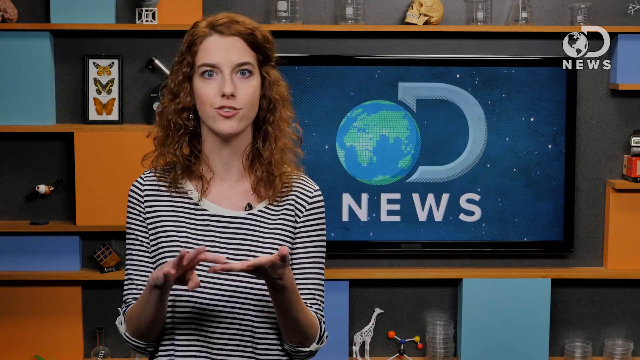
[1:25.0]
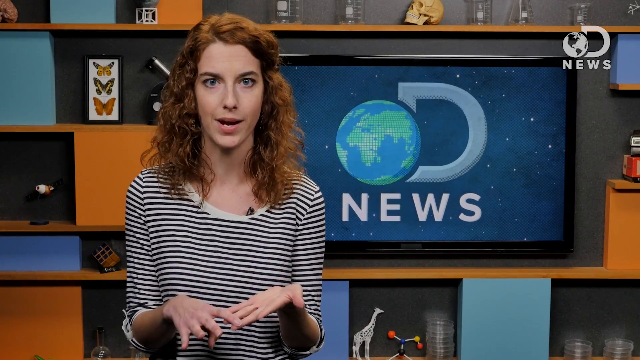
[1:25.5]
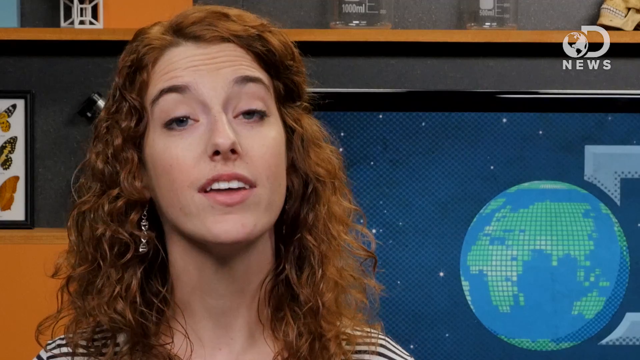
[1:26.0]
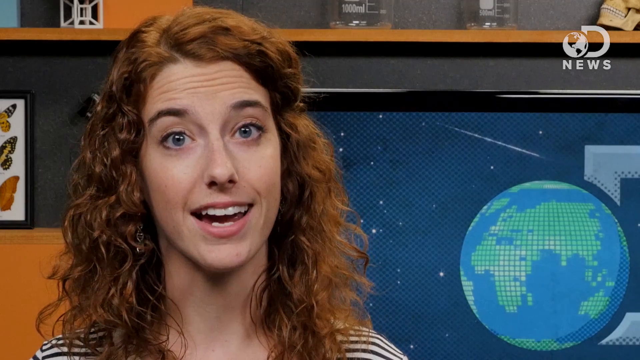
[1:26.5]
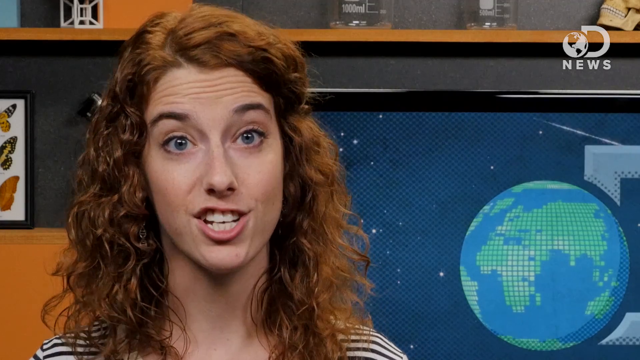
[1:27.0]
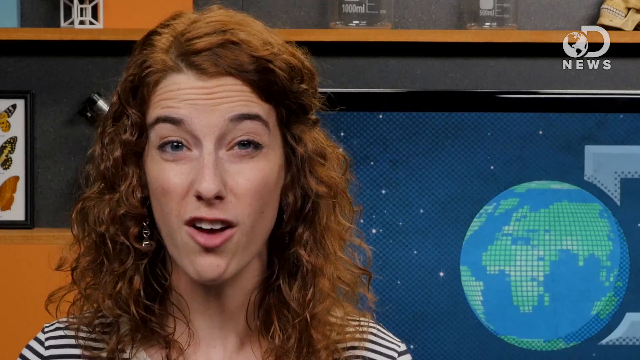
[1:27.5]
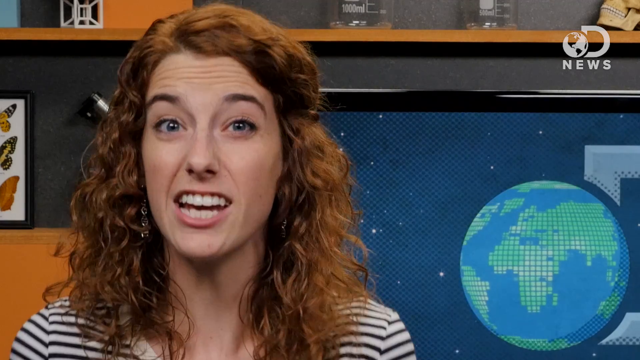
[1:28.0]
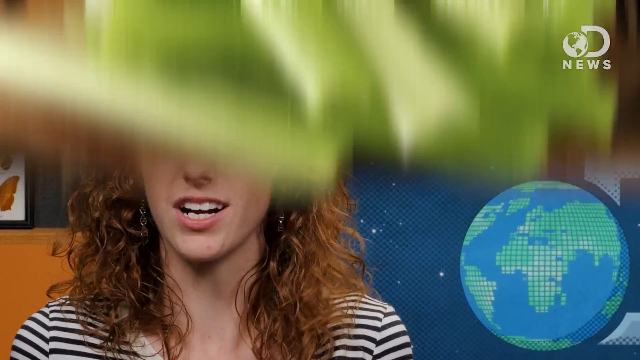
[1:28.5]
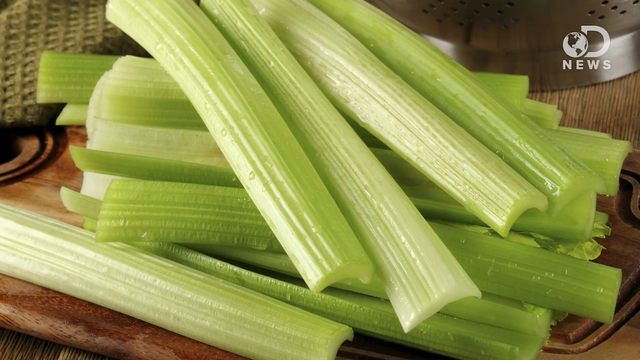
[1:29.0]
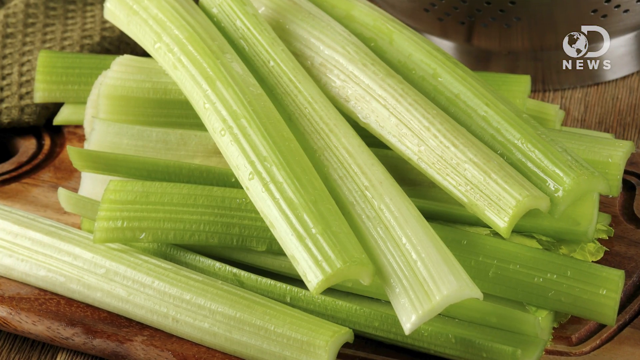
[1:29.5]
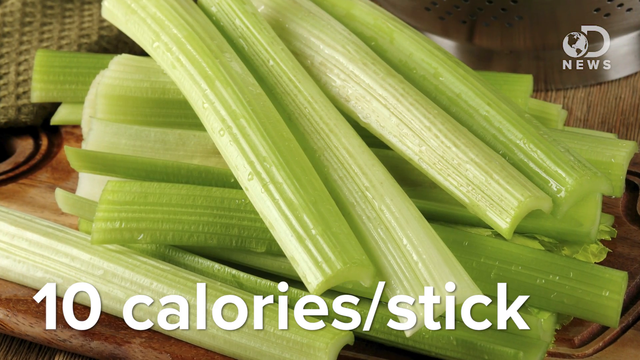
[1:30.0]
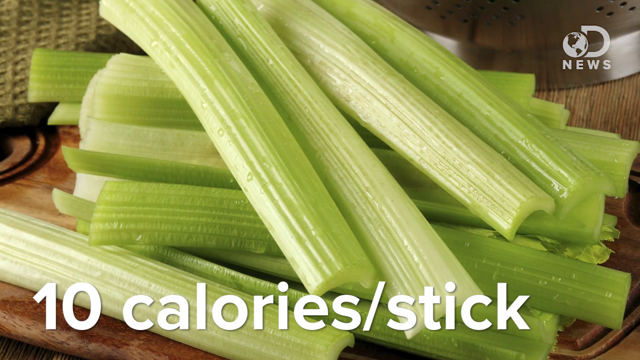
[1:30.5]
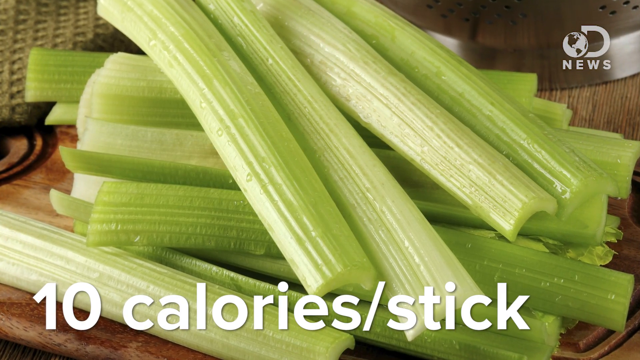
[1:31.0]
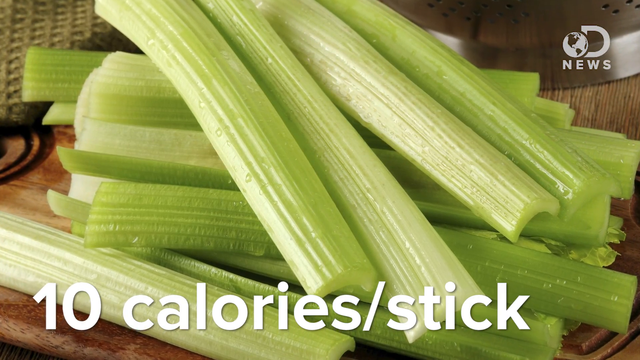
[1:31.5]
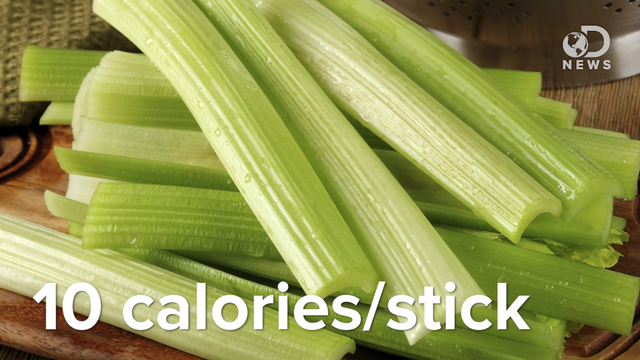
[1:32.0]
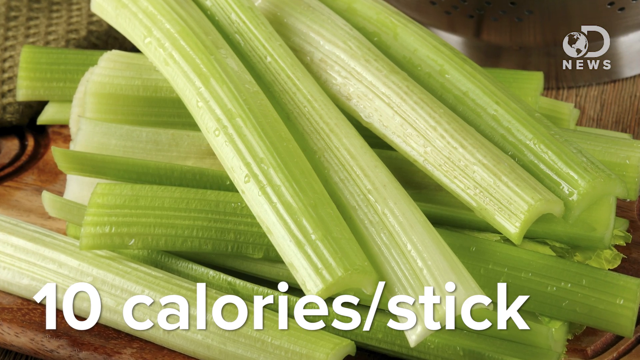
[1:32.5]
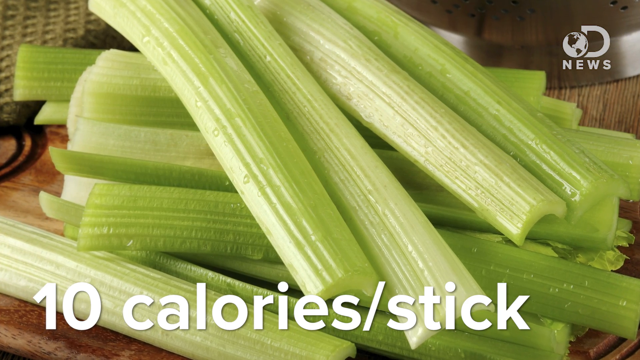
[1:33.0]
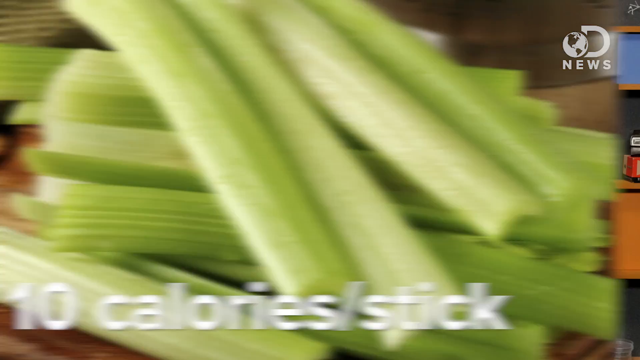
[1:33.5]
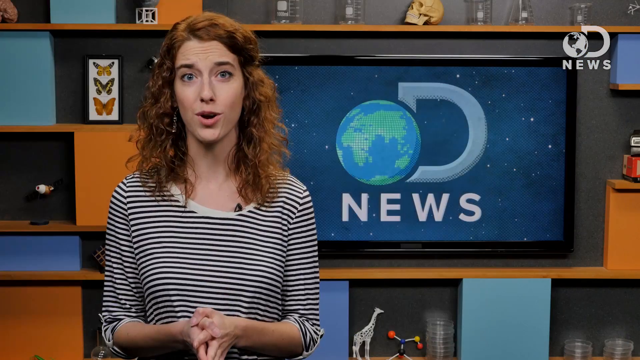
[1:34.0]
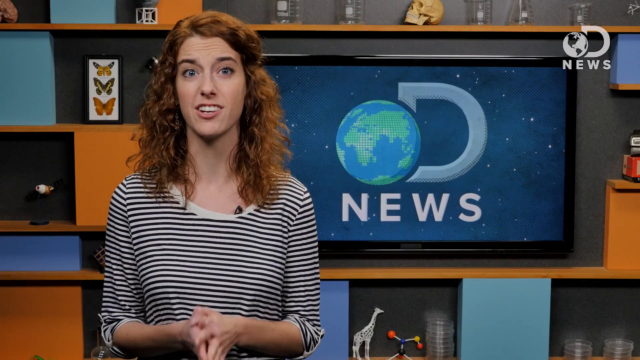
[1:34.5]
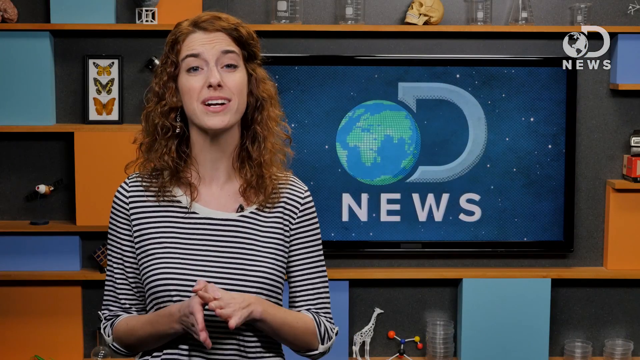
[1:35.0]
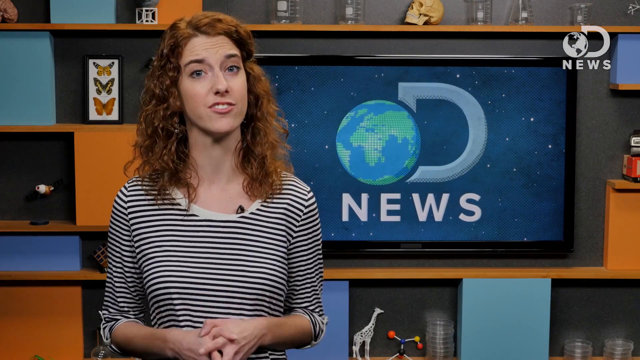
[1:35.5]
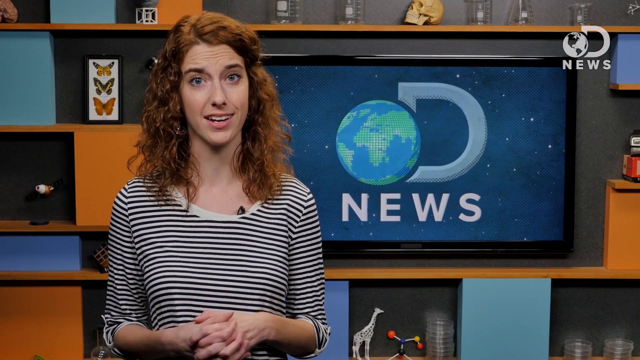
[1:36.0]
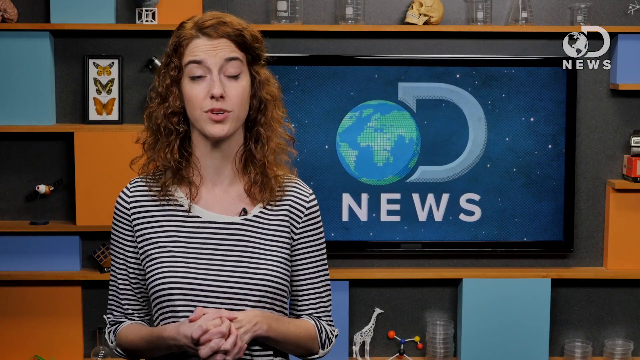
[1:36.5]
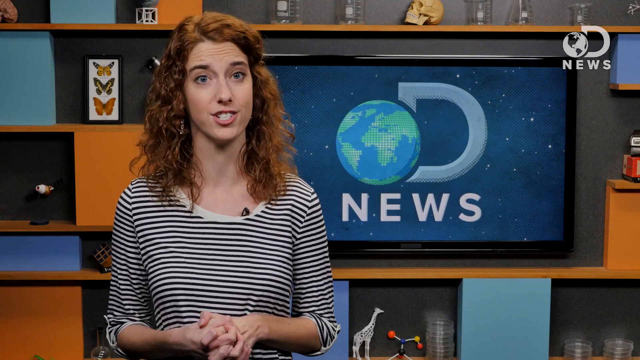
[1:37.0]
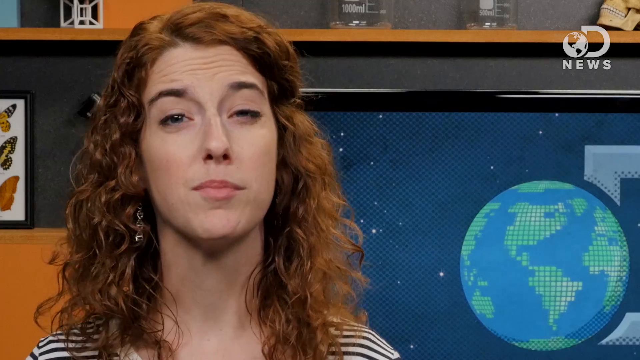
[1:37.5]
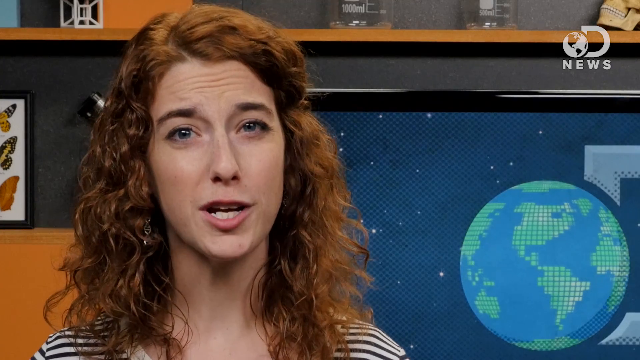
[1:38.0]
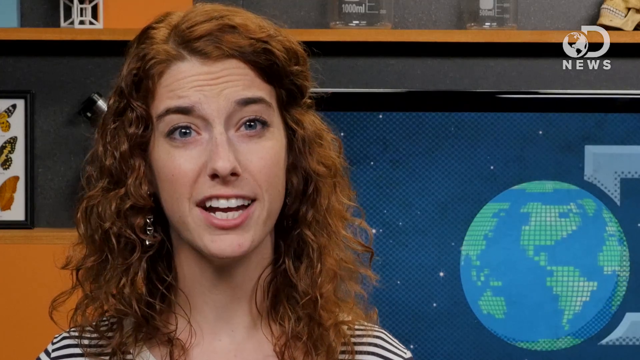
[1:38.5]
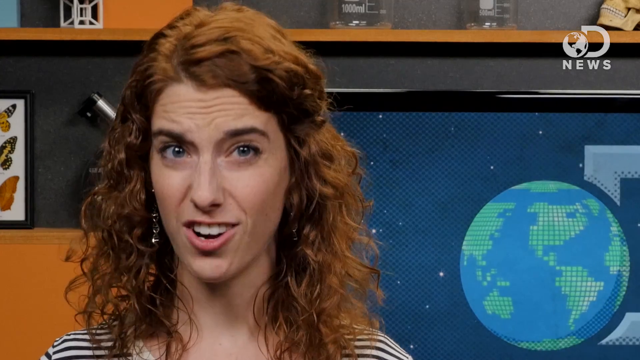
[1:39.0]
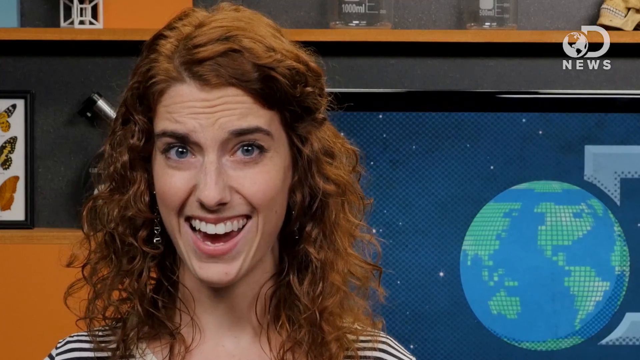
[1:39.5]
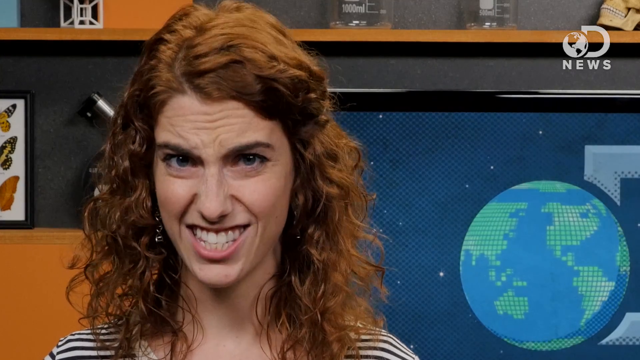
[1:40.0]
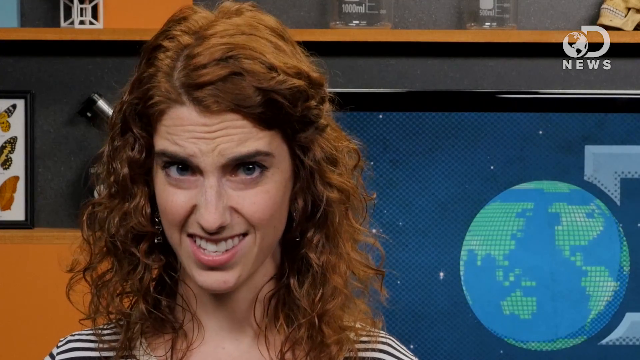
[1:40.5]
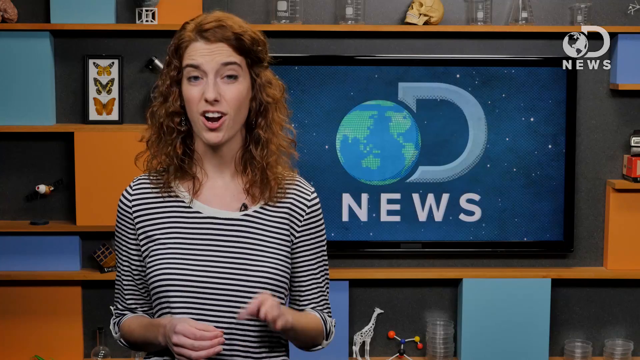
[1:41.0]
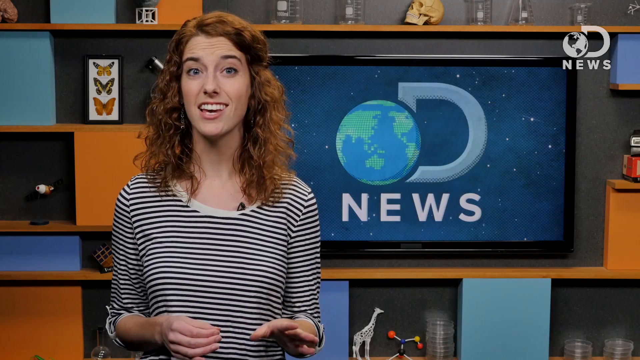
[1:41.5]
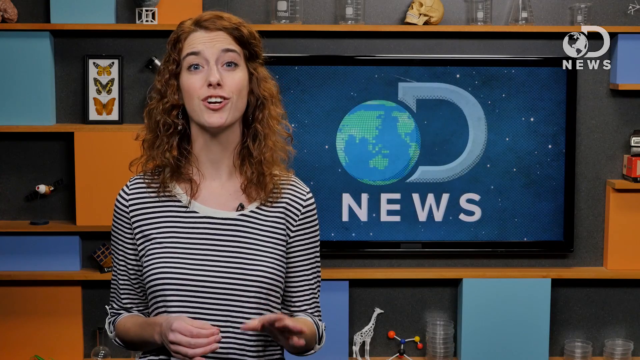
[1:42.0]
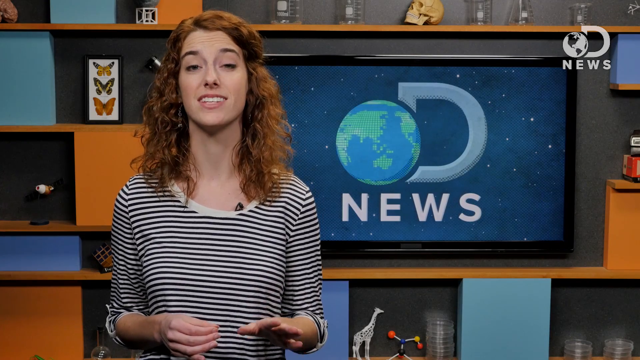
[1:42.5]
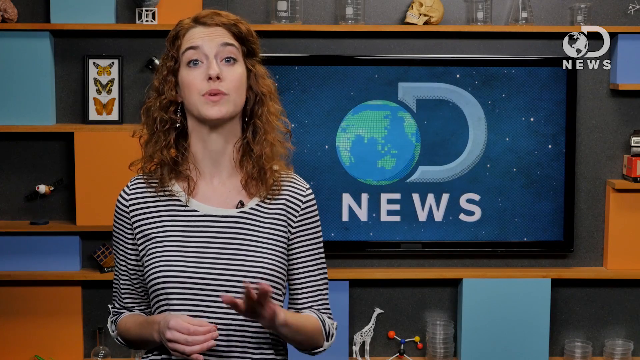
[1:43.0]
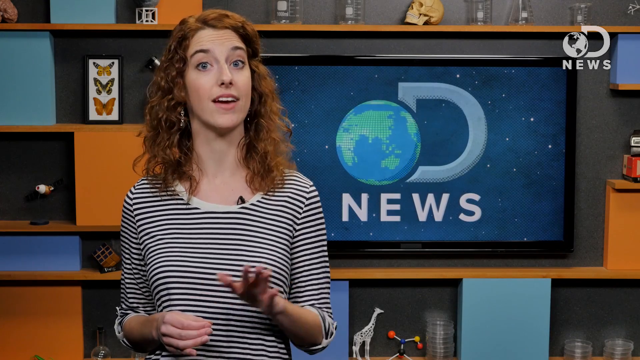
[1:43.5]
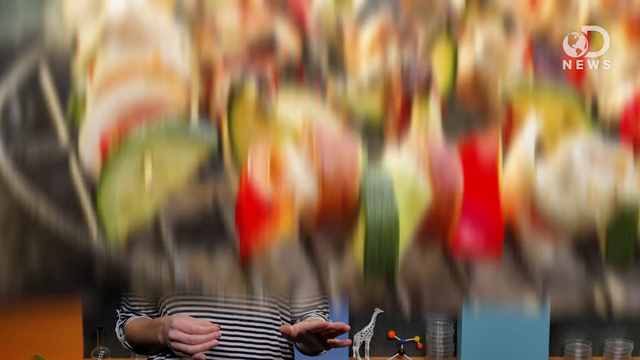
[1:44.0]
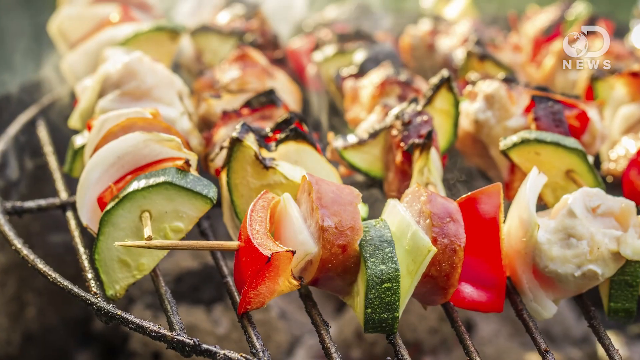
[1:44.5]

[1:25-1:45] A young woman with long, kind of curly red hair stands in front of or to the side of a television screen that shows a spinning globe or earth with the letter D and "news" underneath. She talks; the title of the story is "can you trust the food calorie counts on foods." A pile of celery sticks appears with the text "10 calories a stick," then she talks again. Next come kebabs on a grill with what looks like cucumber, onion and tomato. The video returns to her talking, then to the pile of celery at 10 calories a stick, then to the woman, then to the kebabs, then back to the woman and the celery sticks, and keeps repeating.